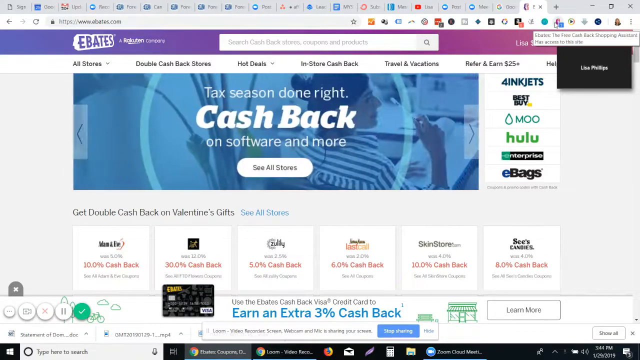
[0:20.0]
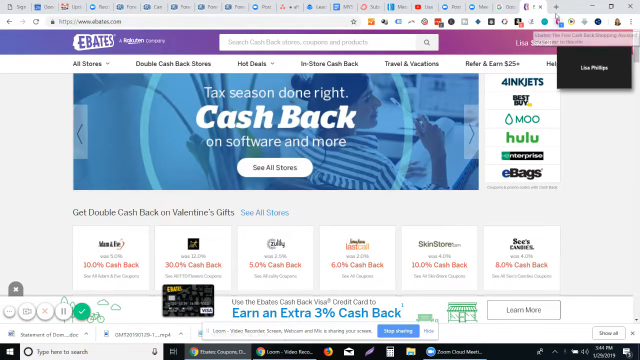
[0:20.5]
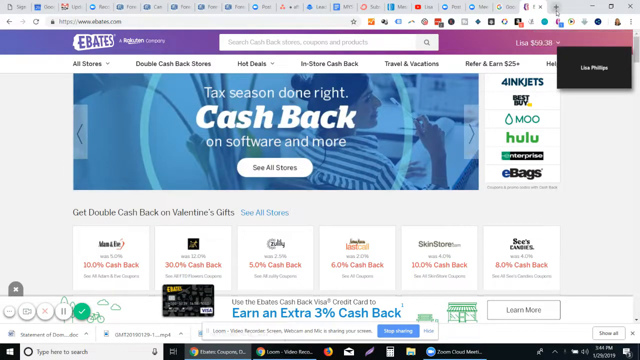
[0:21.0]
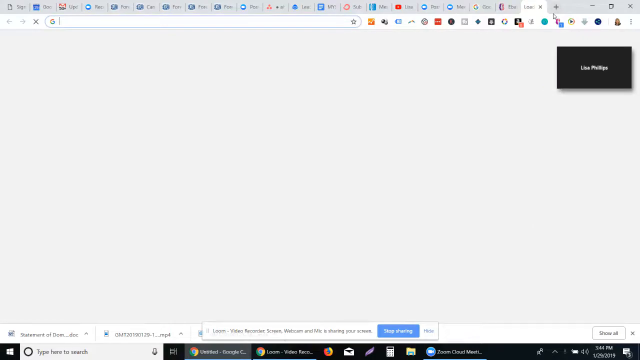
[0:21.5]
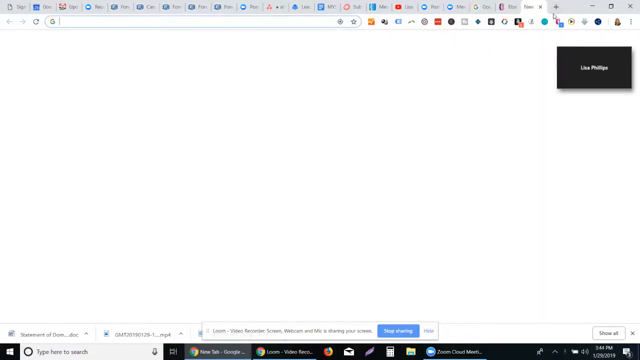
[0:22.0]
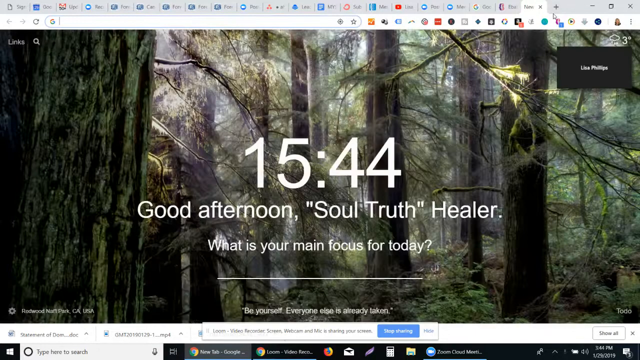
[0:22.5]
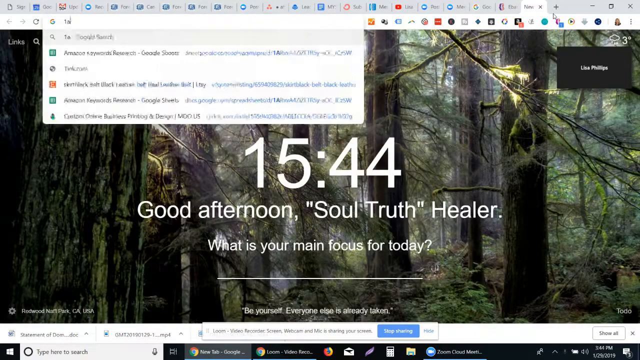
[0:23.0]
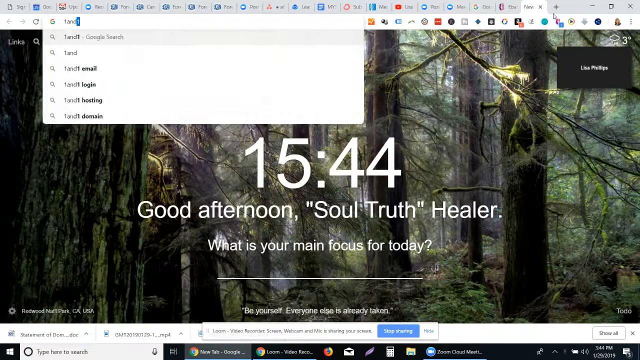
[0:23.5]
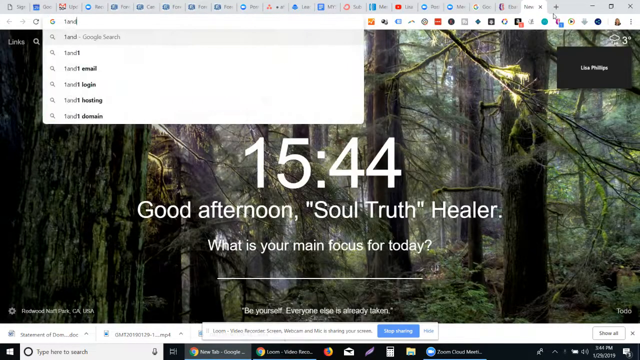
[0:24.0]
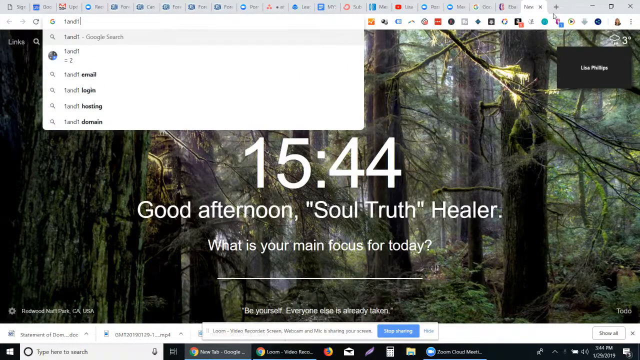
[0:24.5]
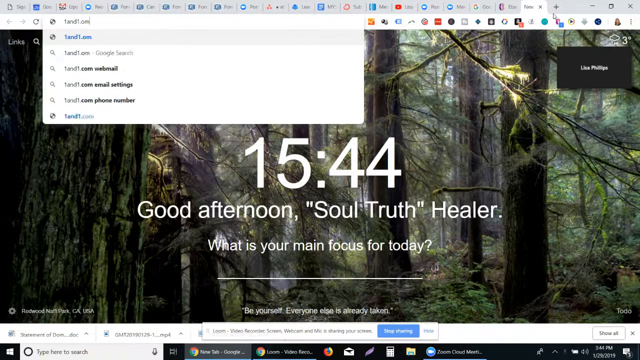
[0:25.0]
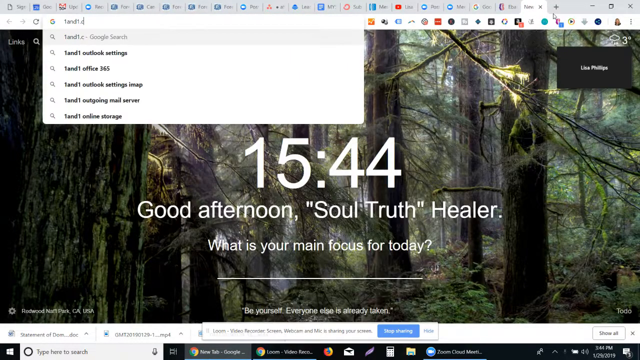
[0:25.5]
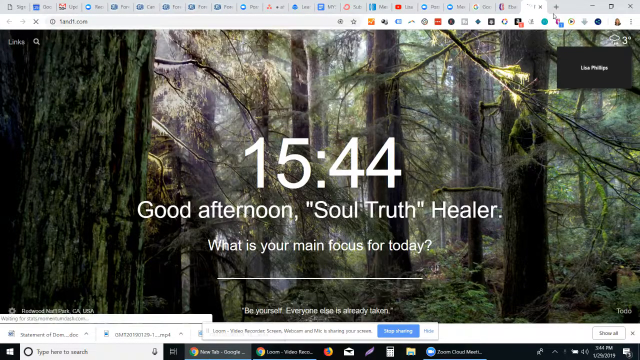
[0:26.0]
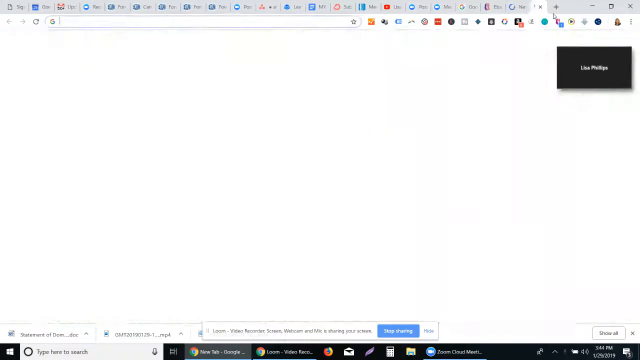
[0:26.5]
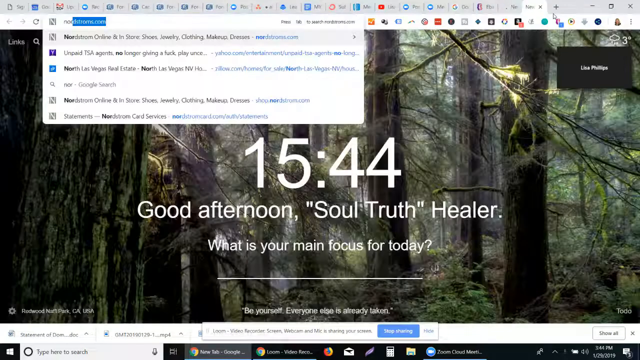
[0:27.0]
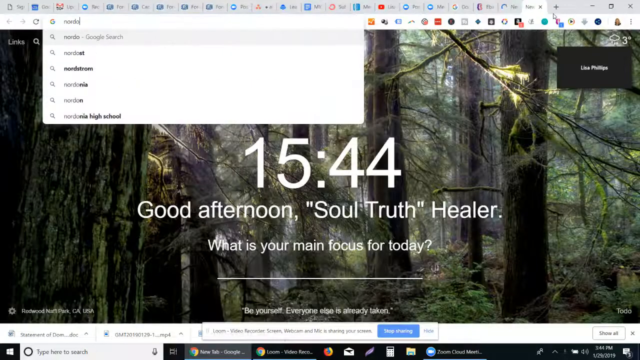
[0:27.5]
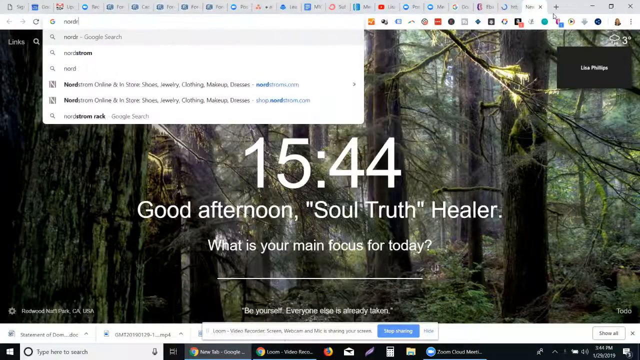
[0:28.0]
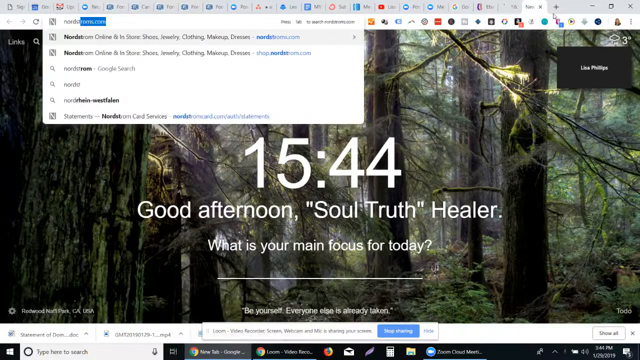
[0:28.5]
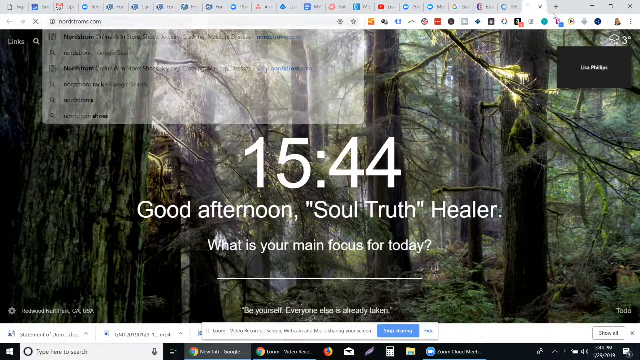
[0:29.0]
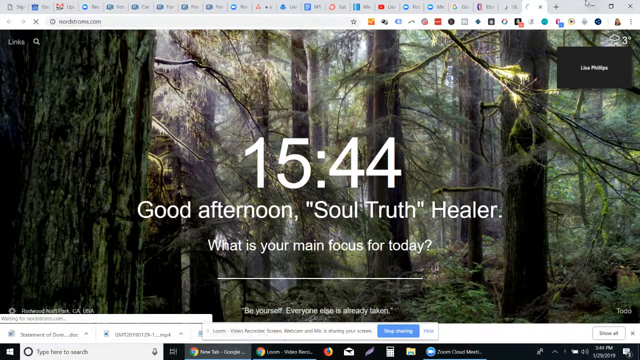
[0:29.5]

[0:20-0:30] "Ebates" appears in the upper left-hand corner in purple and white. The menu reads "all stores double cash back stores hot deals in store cash back travel and vacations refer and earn 25," and underneath it says "tax season done right cash back on software and more." A white oval reads "see all stores." On what looks like a tab, "1544" appears, apparently the time, along with "good afternoon" and "What is your main focus for today?"